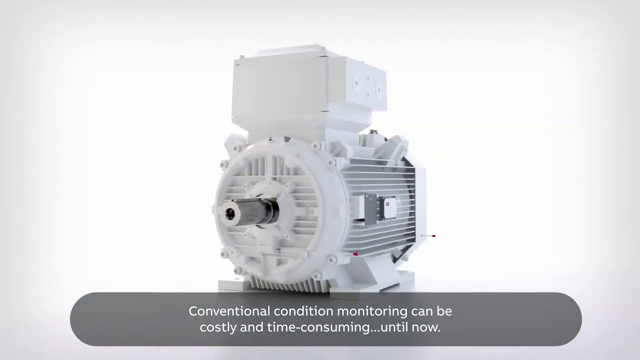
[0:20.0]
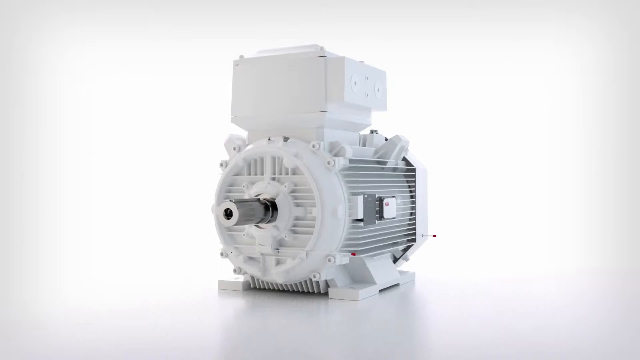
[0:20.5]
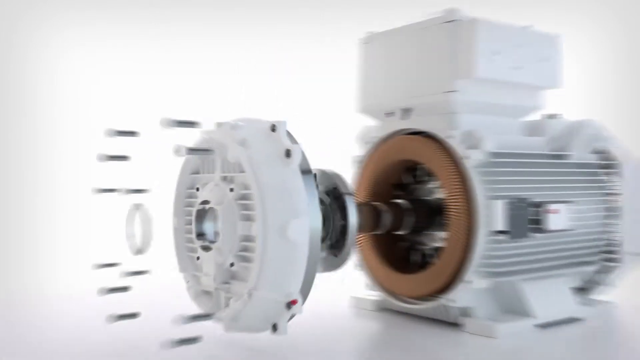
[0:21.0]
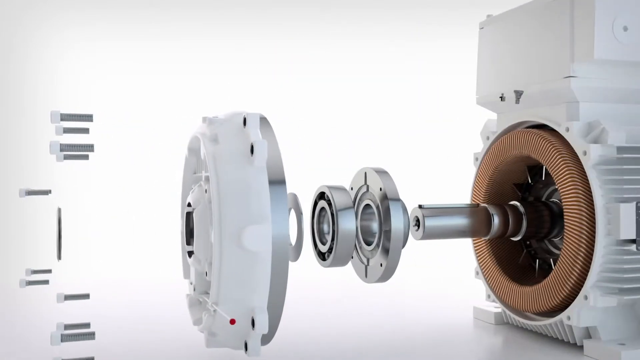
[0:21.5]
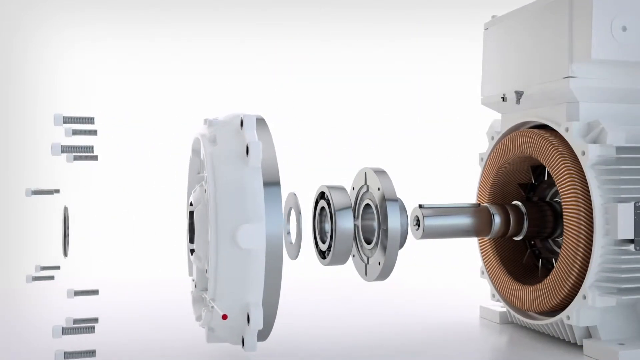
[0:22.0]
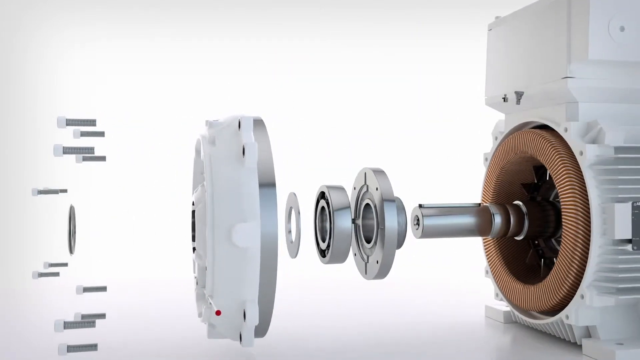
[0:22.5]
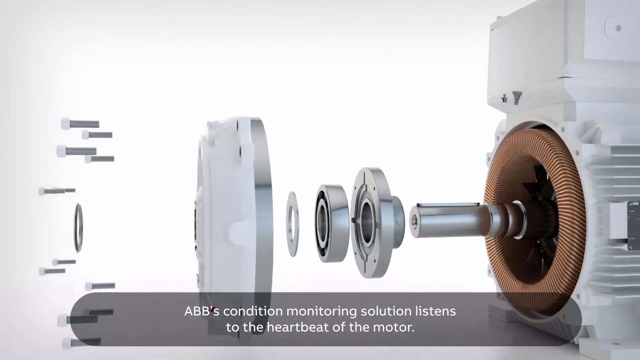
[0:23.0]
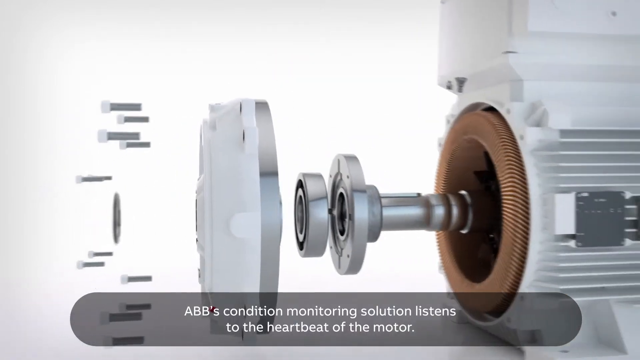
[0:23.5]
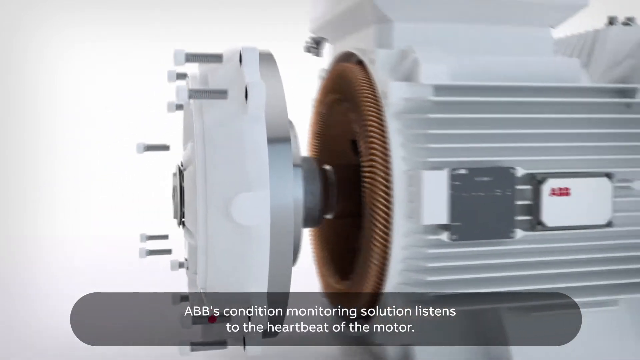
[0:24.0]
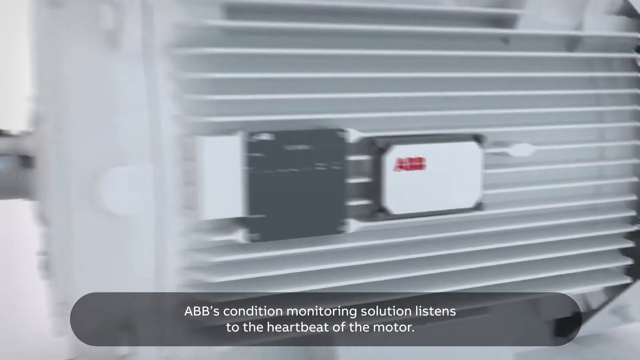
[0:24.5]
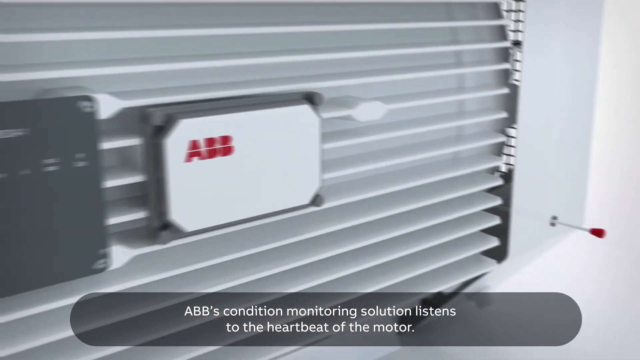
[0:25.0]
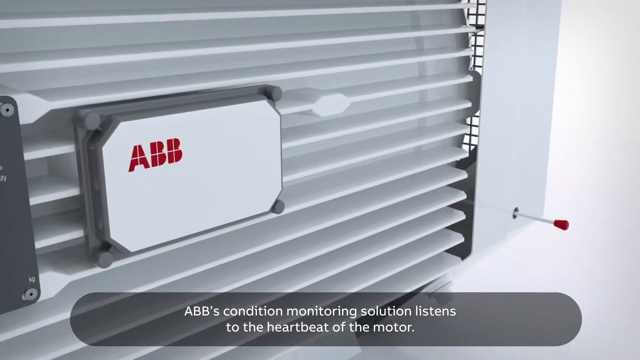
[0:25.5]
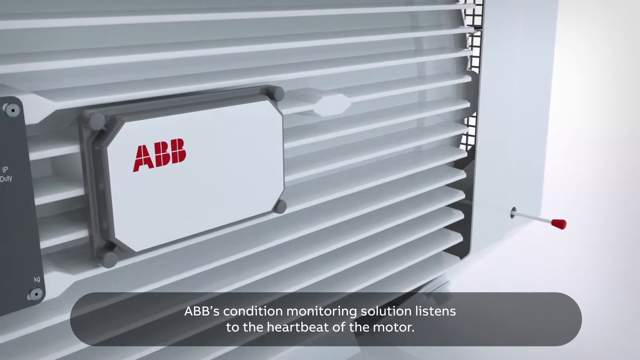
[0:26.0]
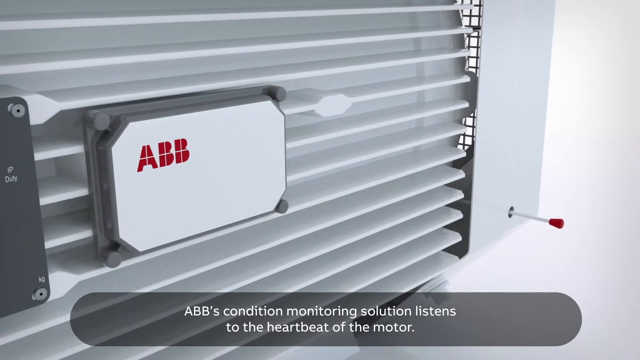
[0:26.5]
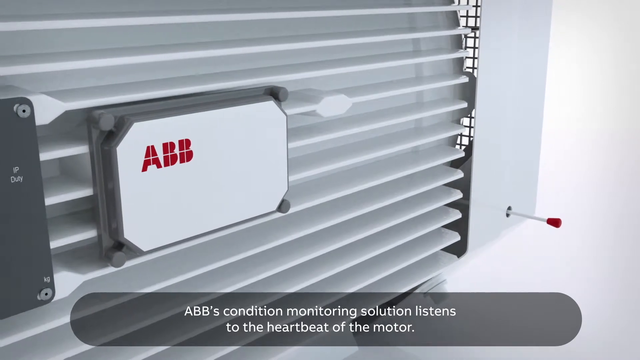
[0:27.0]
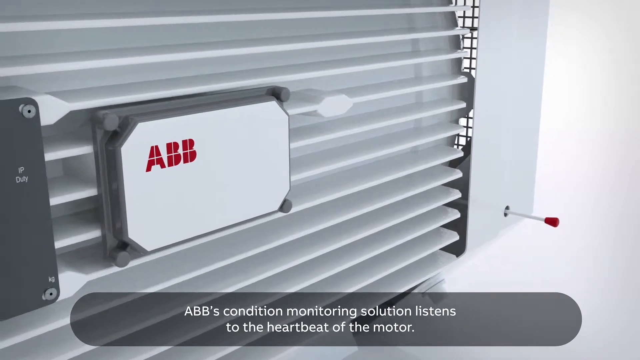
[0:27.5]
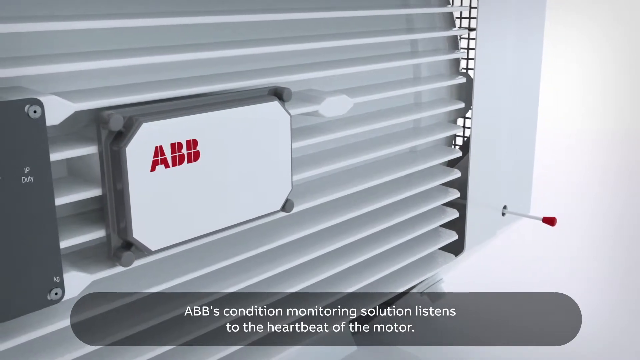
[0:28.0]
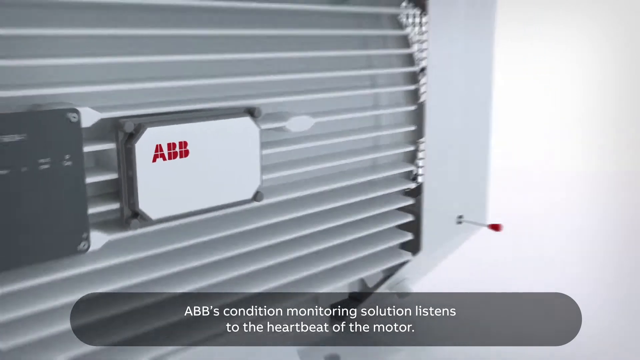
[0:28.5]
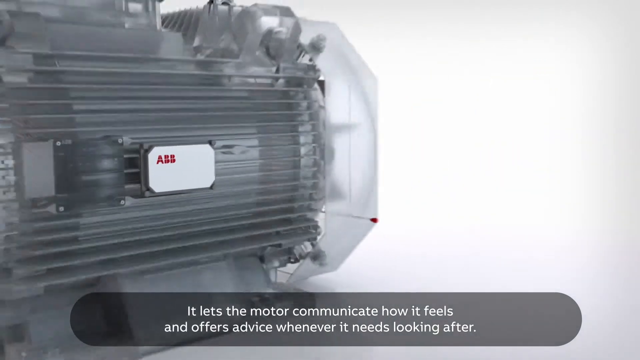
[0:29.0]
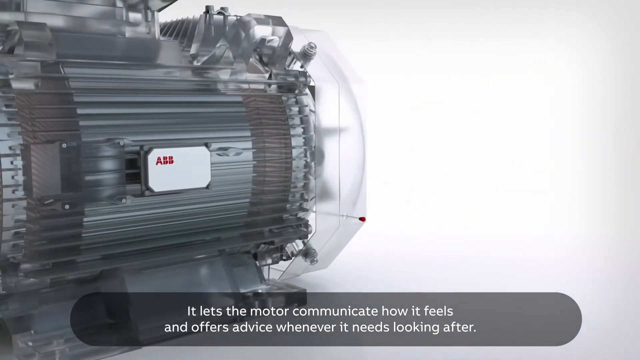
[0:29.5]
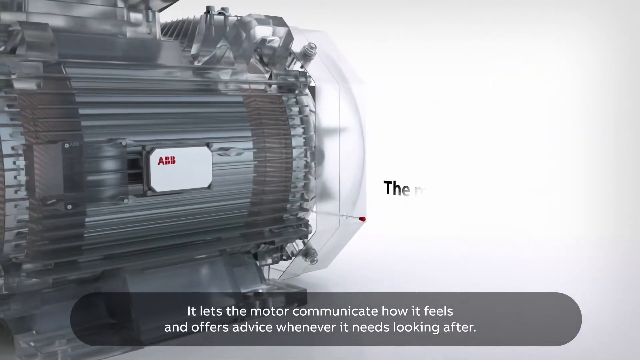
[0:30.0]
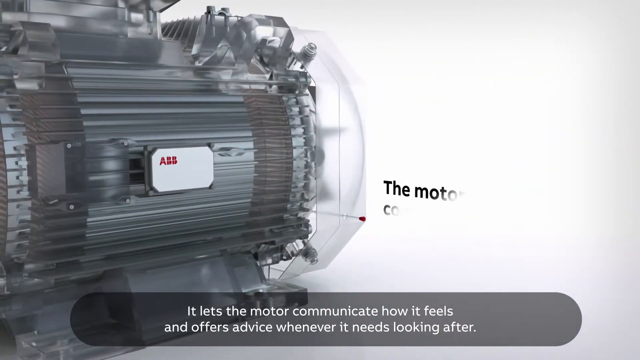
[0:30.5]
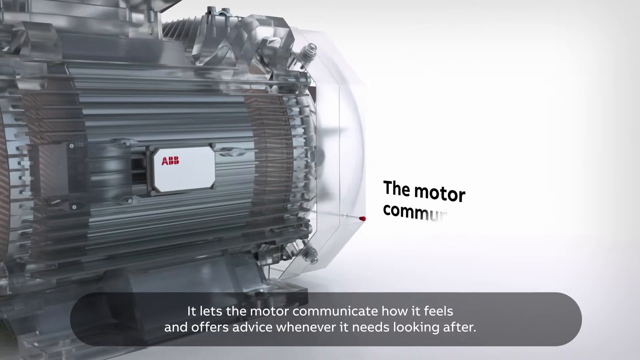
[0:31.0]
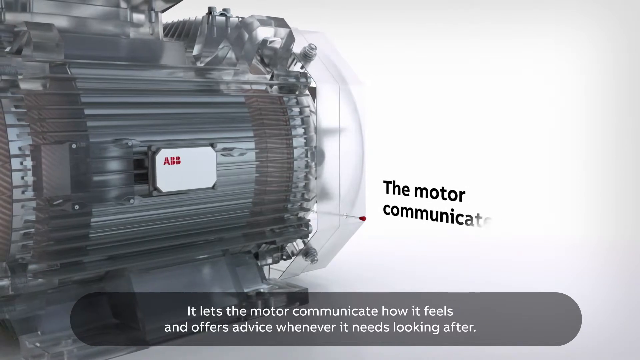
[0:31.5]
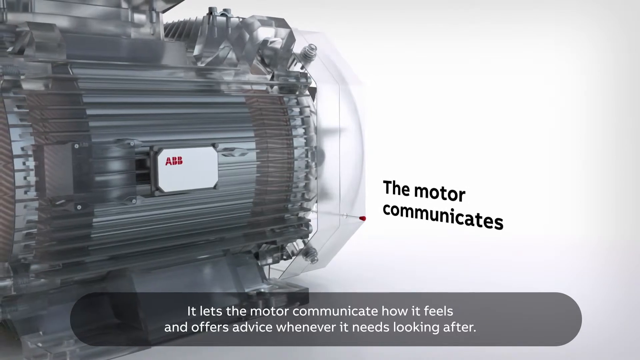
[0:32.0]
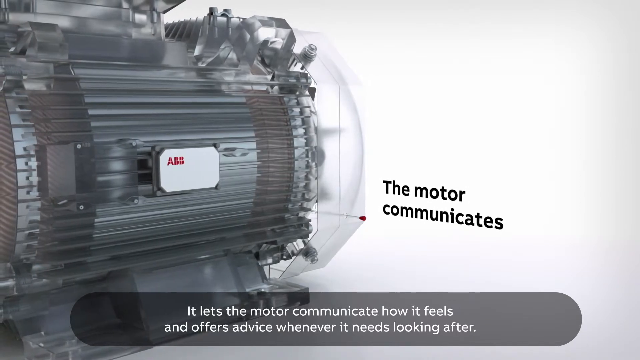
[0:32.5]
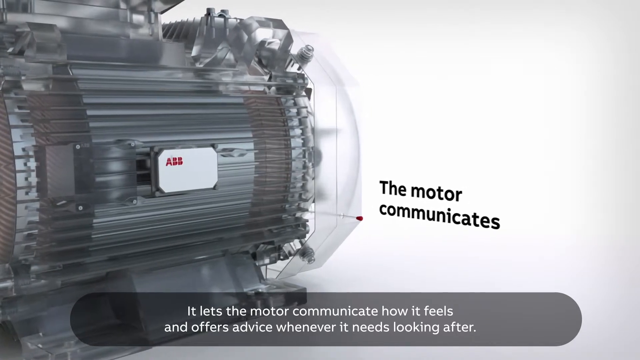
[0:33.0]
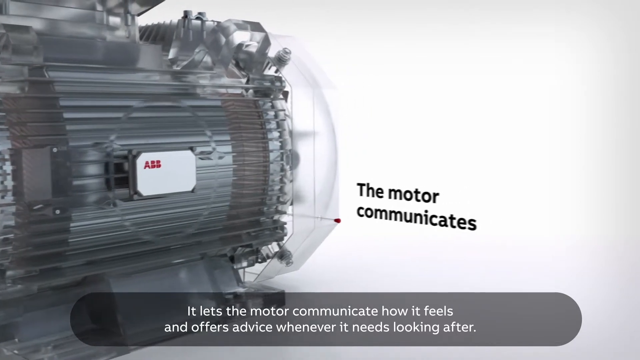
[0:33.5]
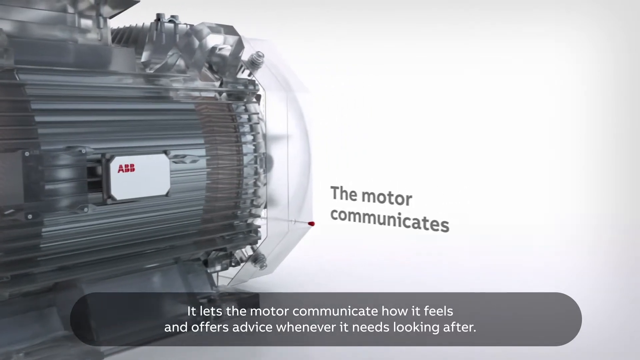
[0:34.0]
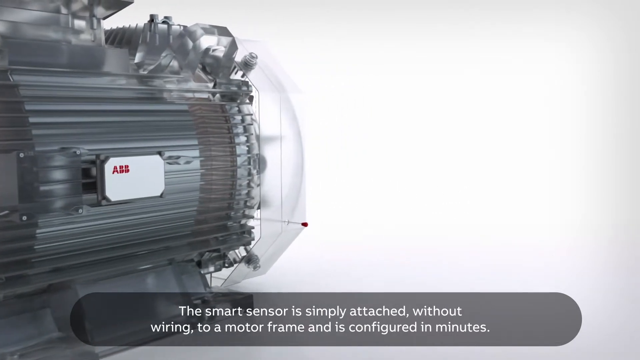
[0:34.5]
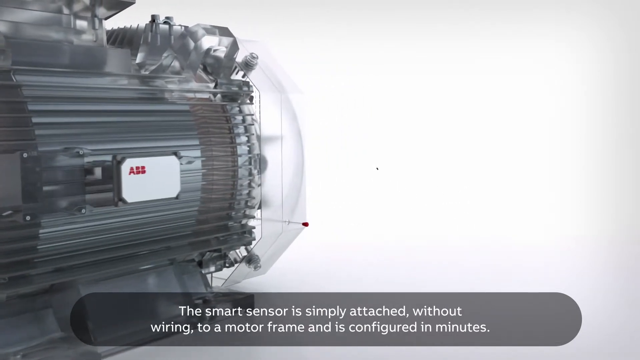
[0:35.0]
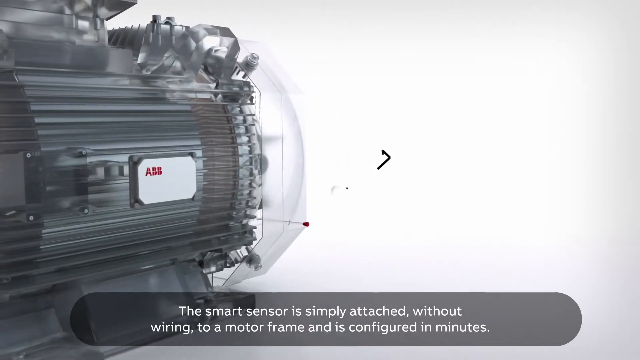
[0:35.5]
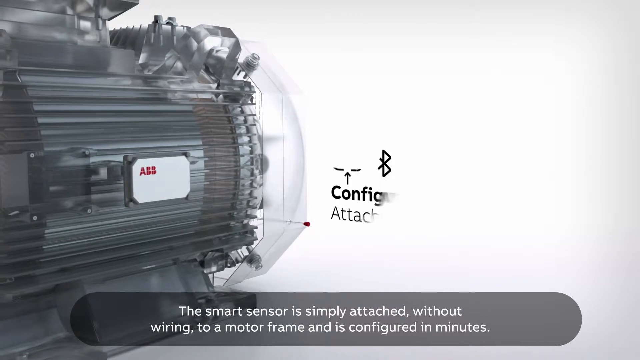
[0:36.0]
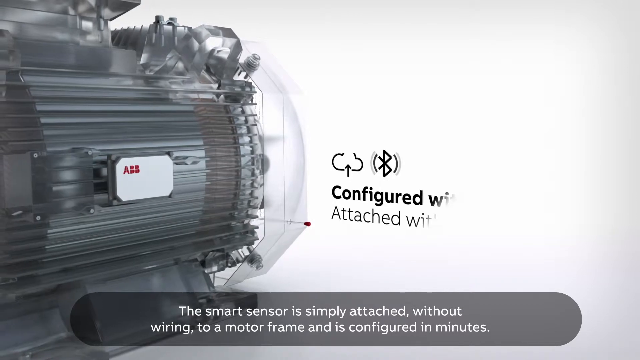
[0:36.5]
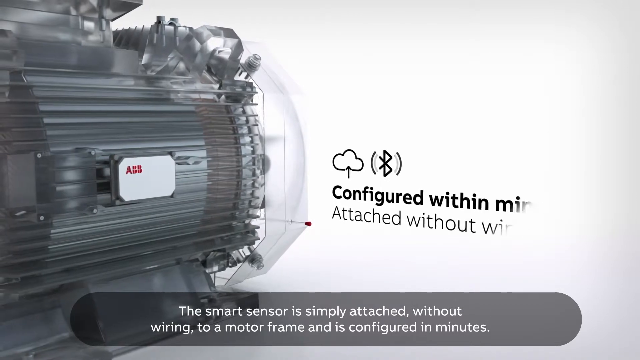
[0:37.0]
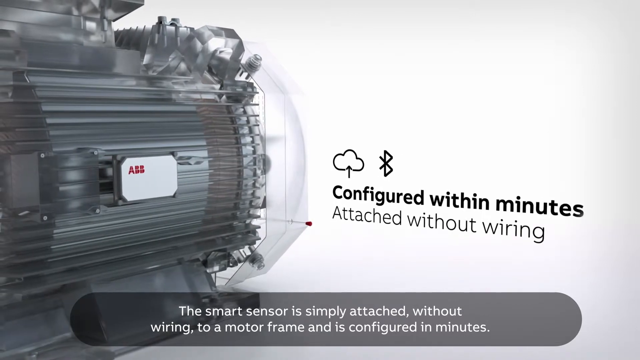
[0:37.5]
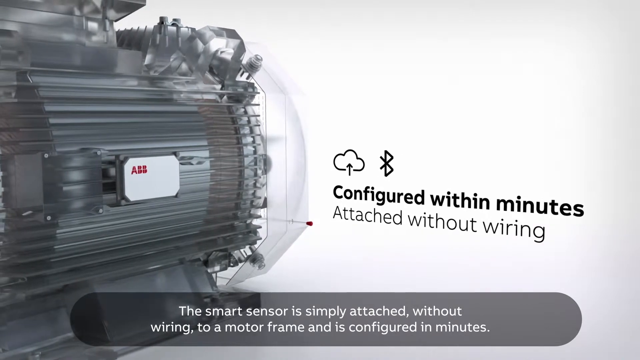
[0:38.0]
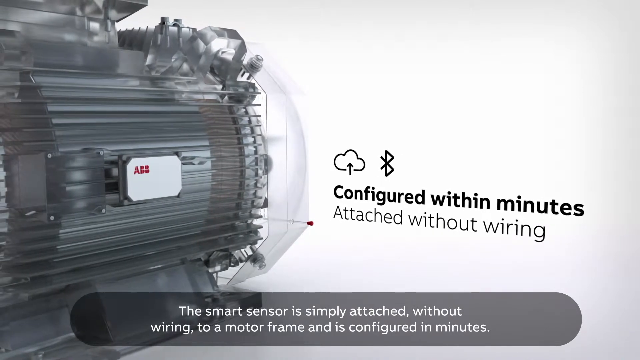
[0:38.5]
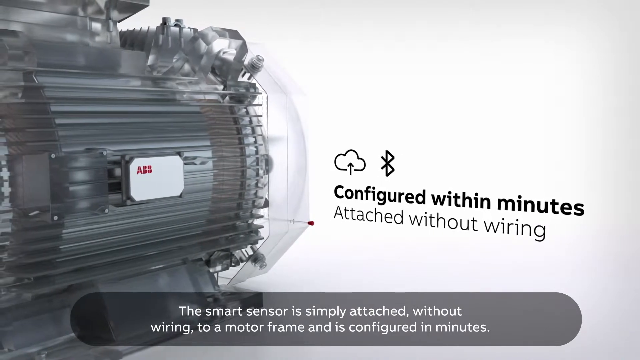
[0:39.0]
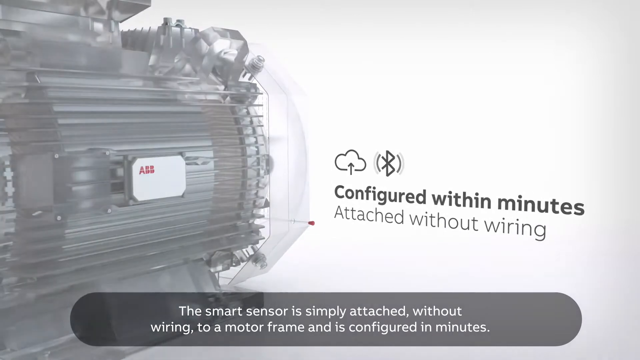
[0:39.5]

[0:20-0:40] Some type of machinery appears on a white background; the machinery is also white, with small shades of gray highlighting its depth and ridges. Across the bottom, a grayscale opaque banner carries the text "conventional condition monitoring can be costly and time-consuming until now." The camera zooms in slowly, then quickly, and the machine is taken apart: there are multiple rings, and some sort of cylinder in the middle exposes the housing for a fan that has copper-colored coils in front of the rings. On the left side are all the nuts and bolts and a small circular plate. The machine is then put back together, and the ABB company symbol appears in red, with text at the bottom of the screen: "ABB's condition monitoring solution listens to the heartbeat of the motor" and "it lets the motor communicate how it feels and offers advice whenever it needs looking after." As the casing or housing is stripped away, text coming off the interior of the motor says "the motor communicates." A ripple effect appears on the side of the machine, followed by the text "configured within minutes, attached without wiring," and below it at the bottom of the screen, "the smart sensor is simply attached without wiring to a motor frame and is configured in minutes."